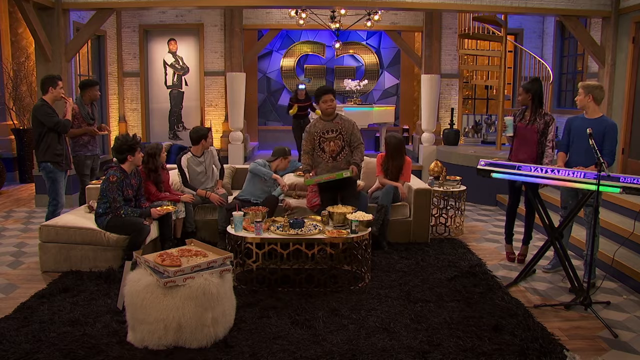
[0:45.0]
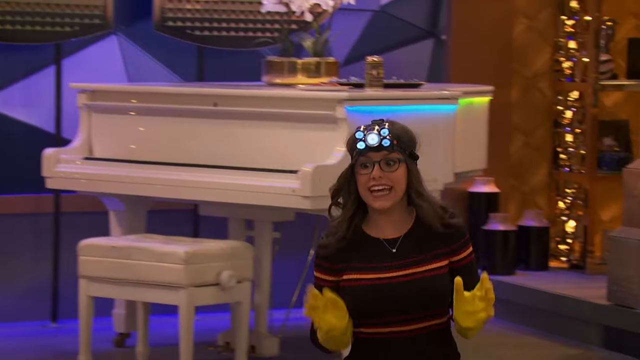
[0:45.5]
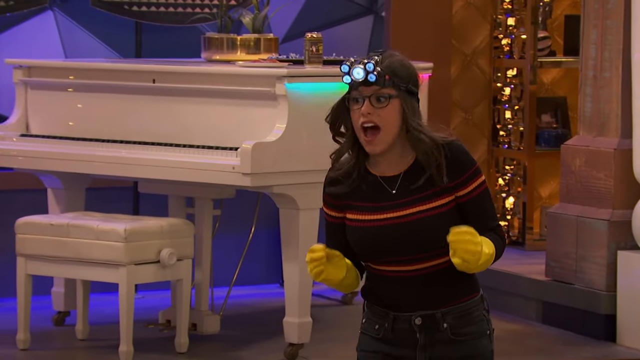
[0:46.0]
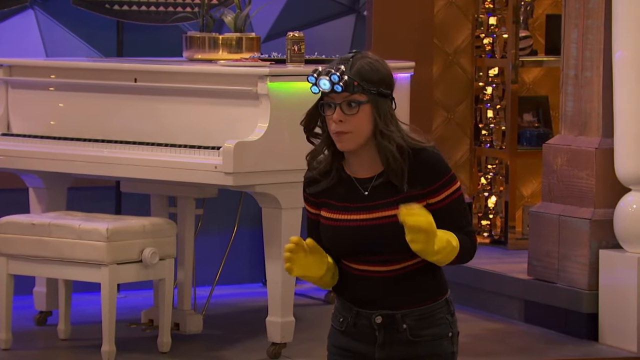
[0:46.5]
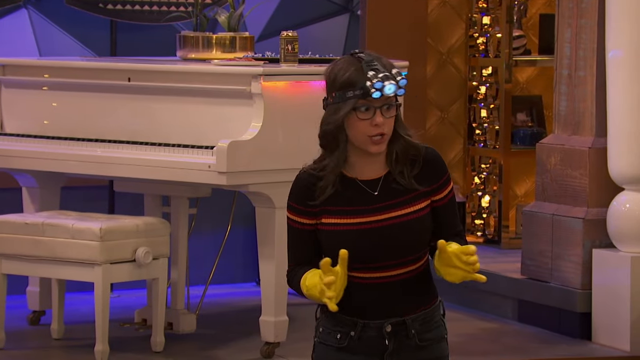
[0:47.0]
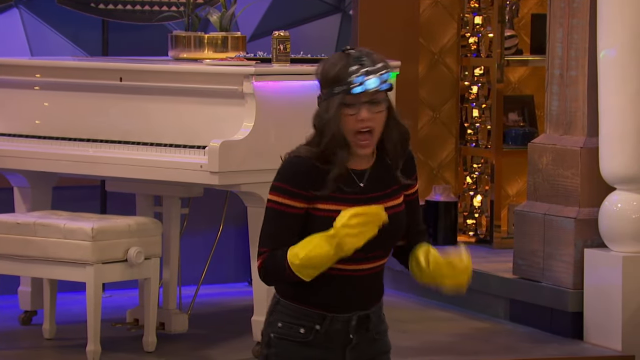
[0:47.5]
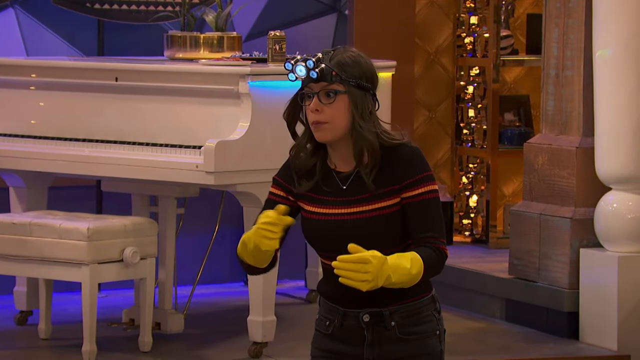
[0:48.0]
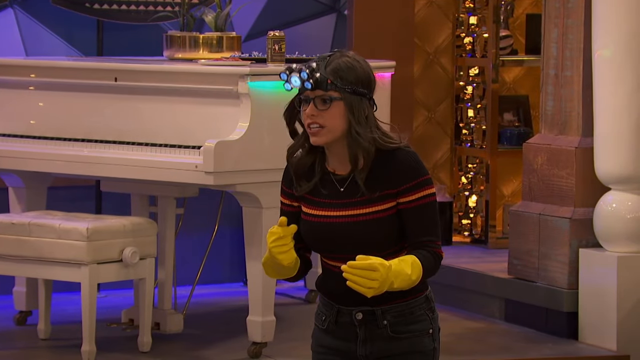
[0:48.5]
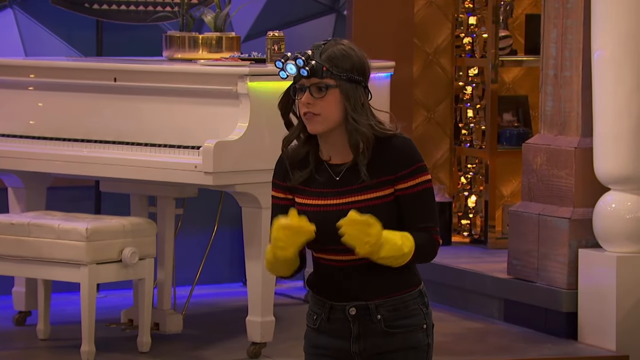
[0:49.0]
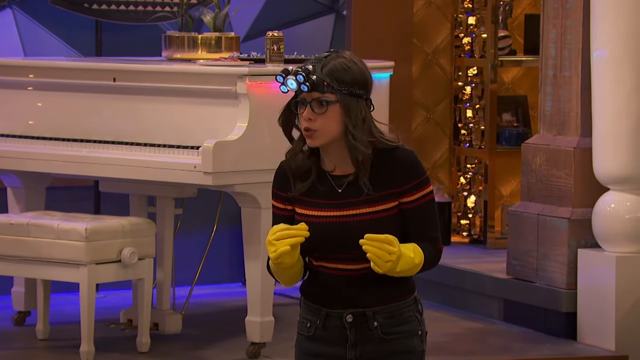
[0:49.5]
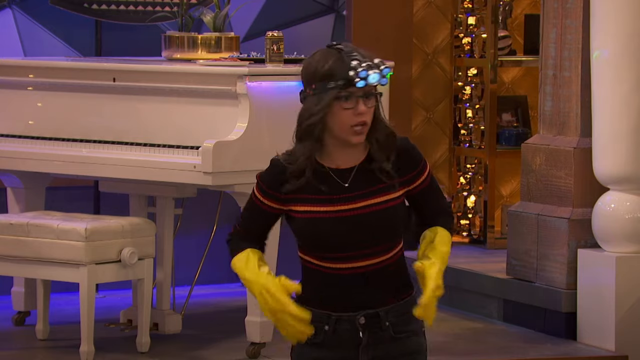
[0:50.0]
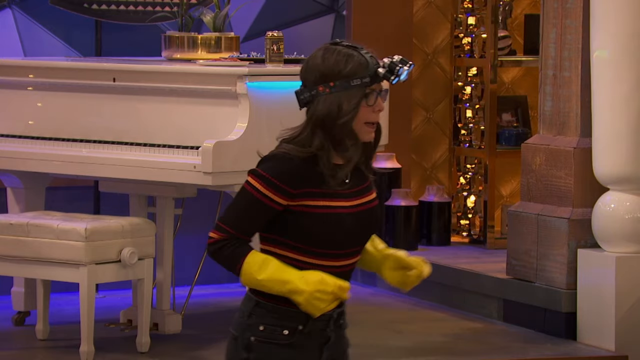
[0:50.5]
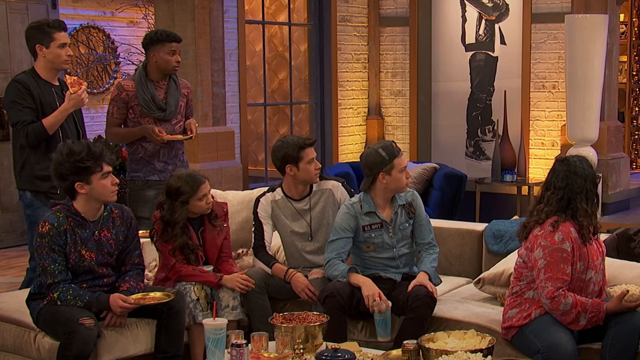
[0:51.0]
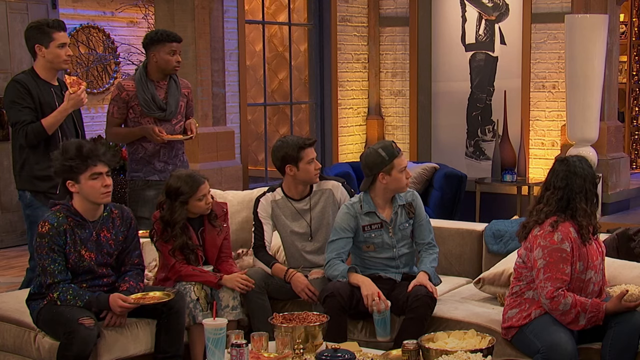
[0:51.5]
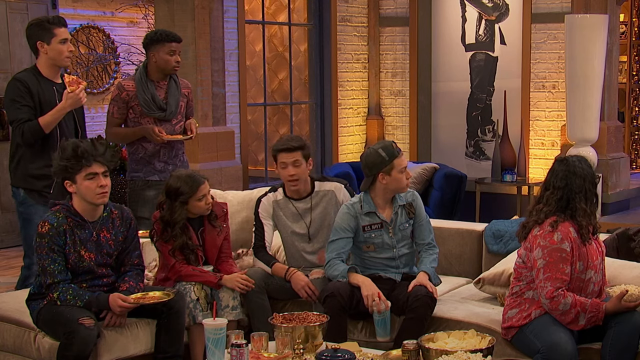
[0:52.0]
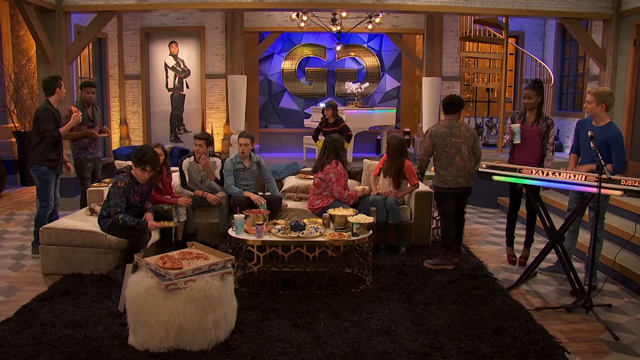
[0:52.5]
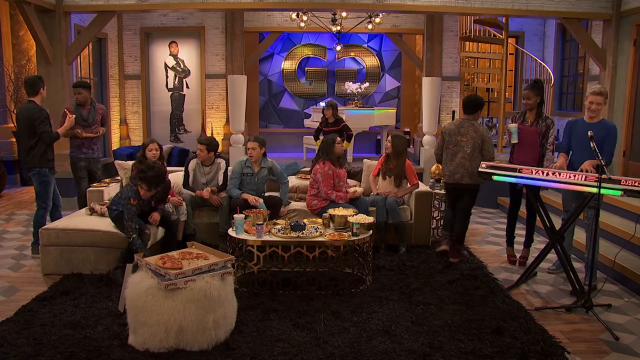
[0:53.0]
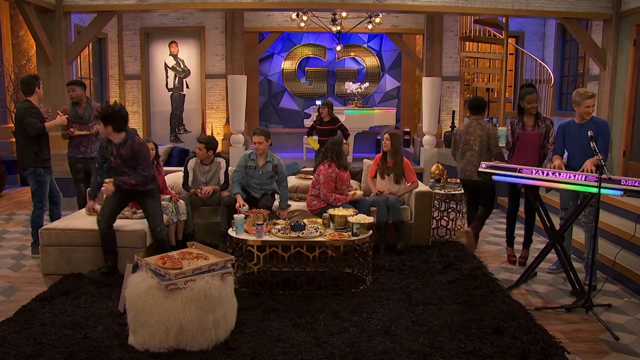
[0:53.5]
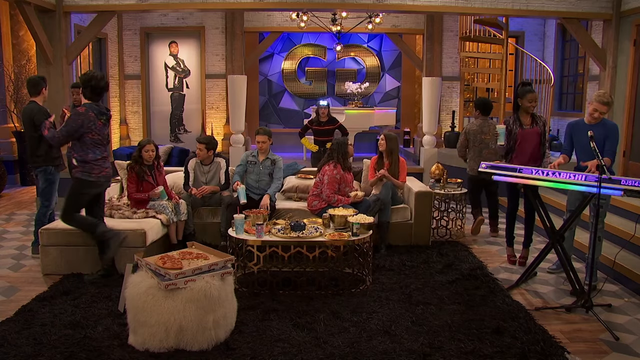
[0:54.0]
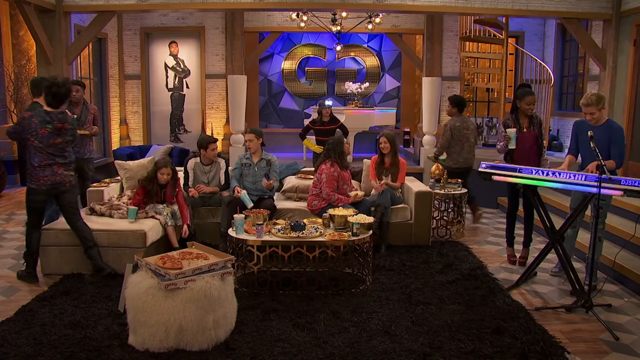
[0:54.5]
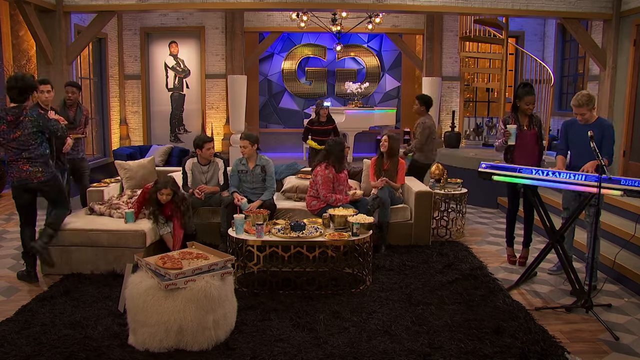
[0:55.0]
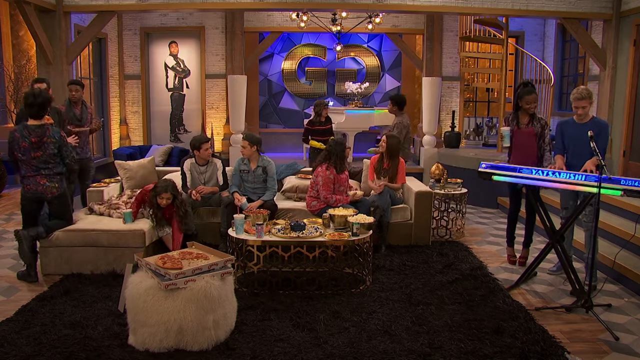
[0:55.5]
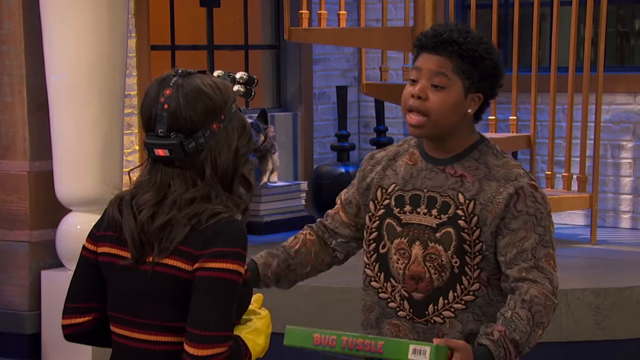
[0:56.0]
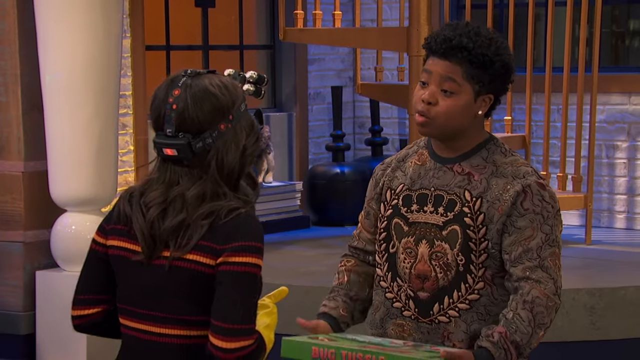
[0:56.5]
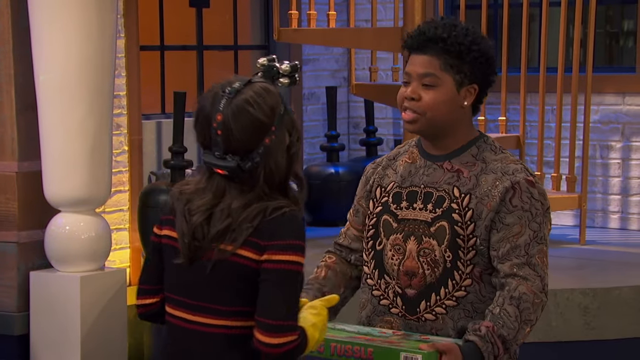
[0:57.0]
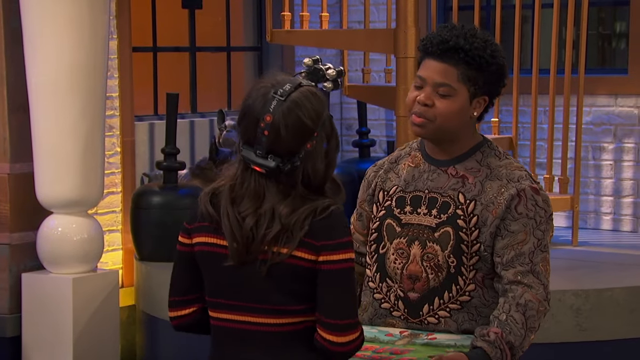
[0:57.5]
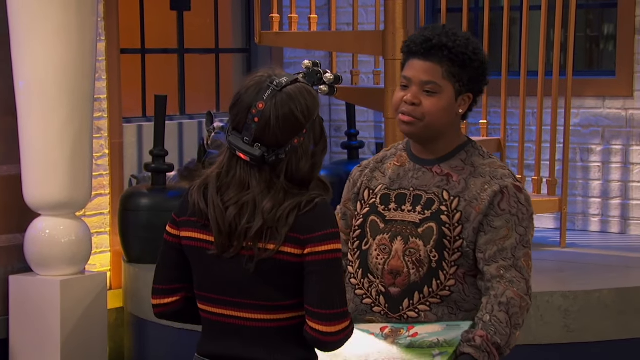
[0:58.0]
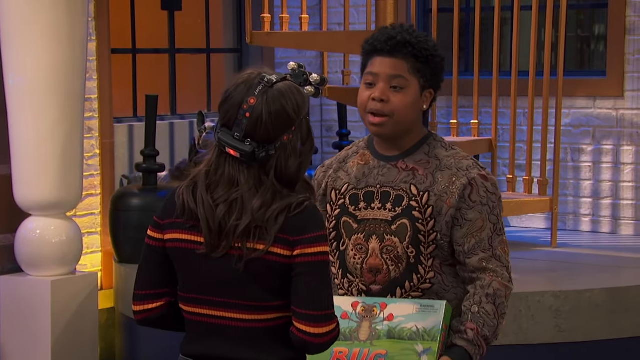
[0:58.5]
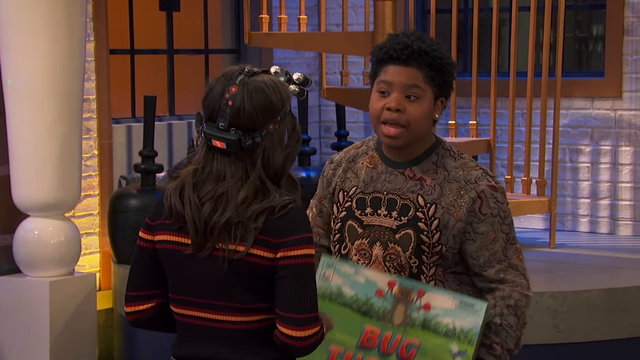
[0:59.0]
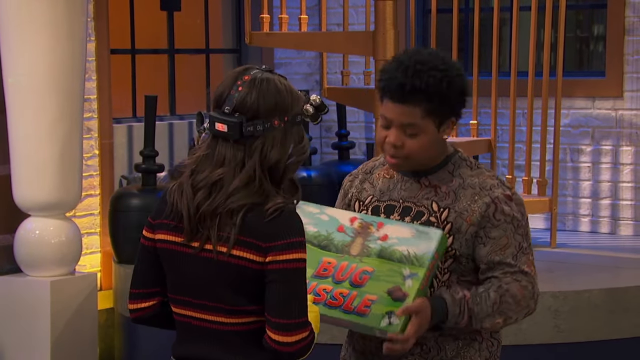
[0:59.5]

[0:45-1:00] At the same party, the group of pre-teens or young teenagers are engaged in different situations. A younger lady runs out into the scene wearing yellow gloves and a light on her head, apparently trying to get some sort of assistance or help with a situation. Toward the end, the young man trying to get someone to join his board game tries to get this young lady to go along with him, to the disinterest of everyone else in the room.